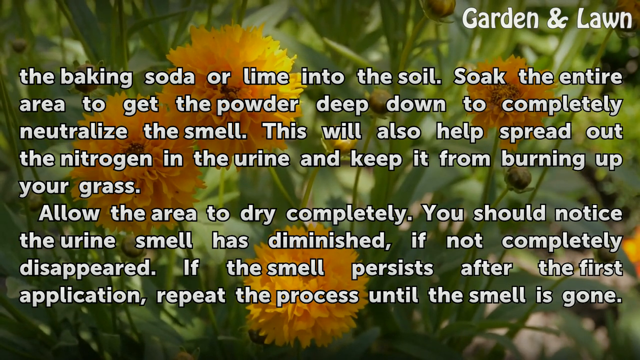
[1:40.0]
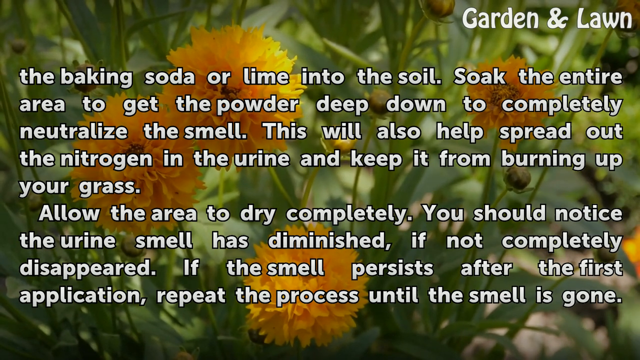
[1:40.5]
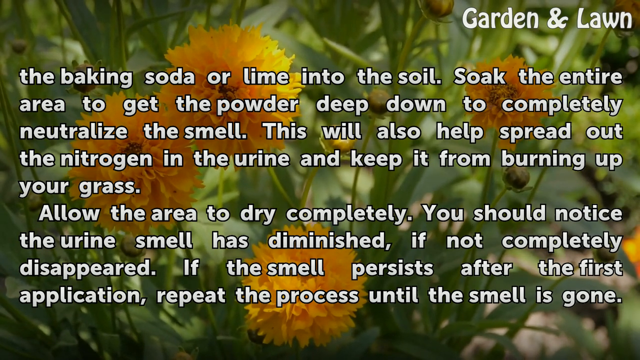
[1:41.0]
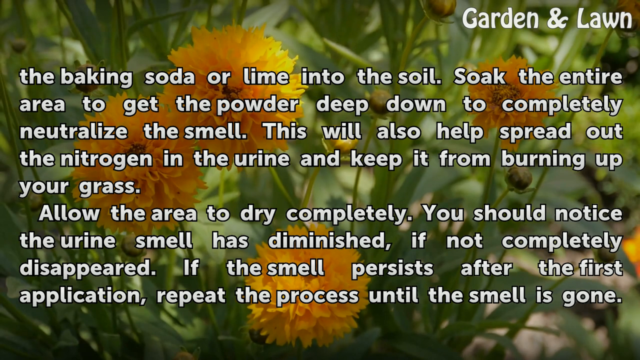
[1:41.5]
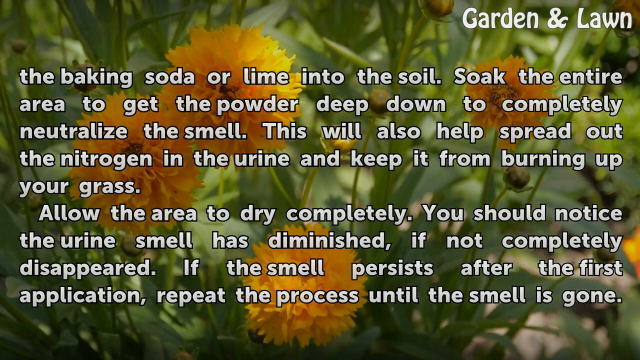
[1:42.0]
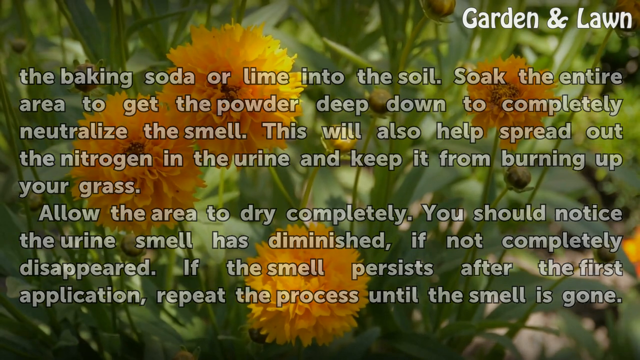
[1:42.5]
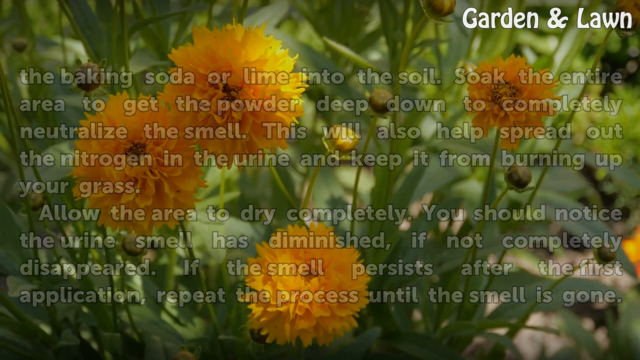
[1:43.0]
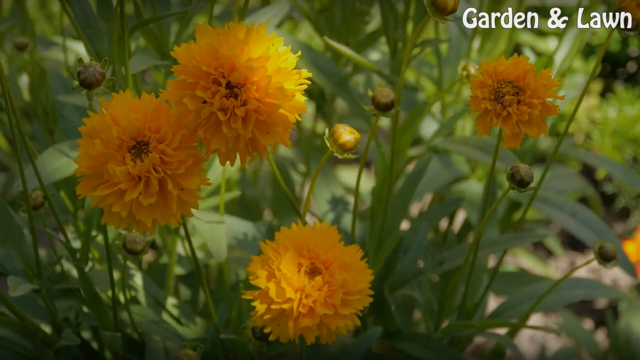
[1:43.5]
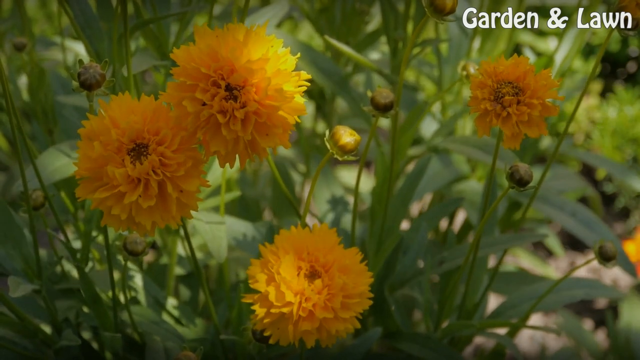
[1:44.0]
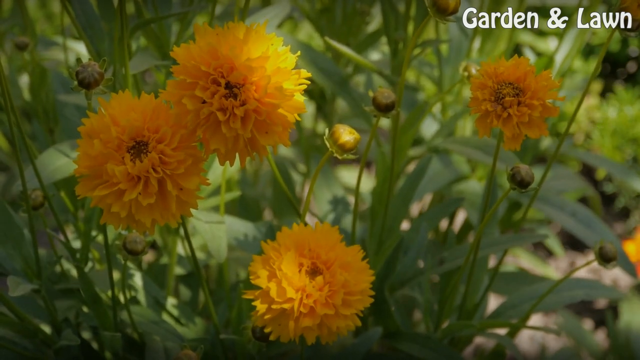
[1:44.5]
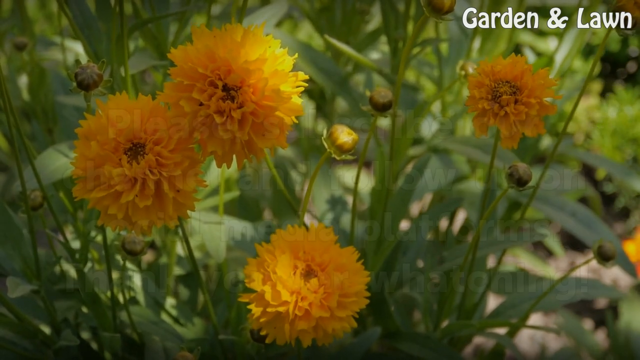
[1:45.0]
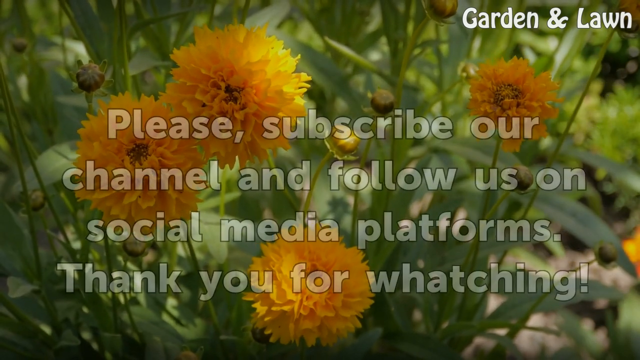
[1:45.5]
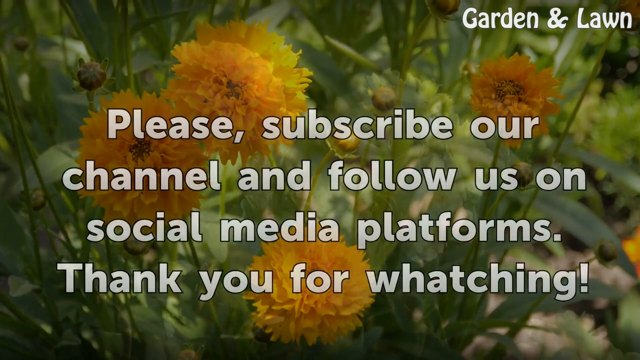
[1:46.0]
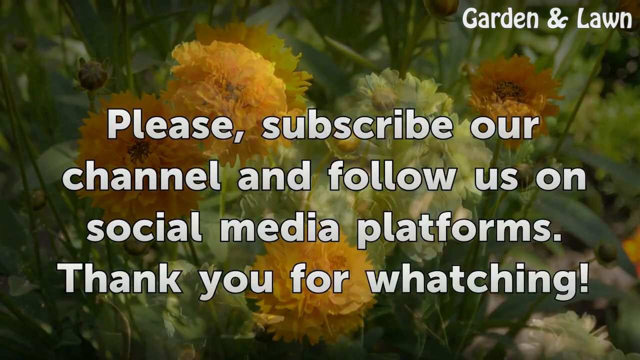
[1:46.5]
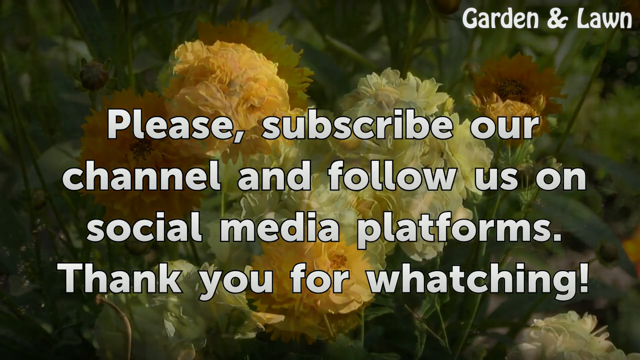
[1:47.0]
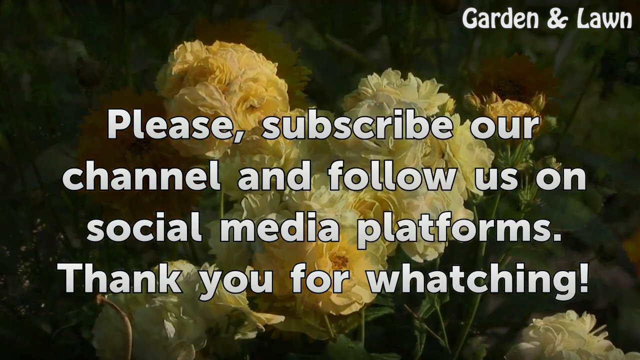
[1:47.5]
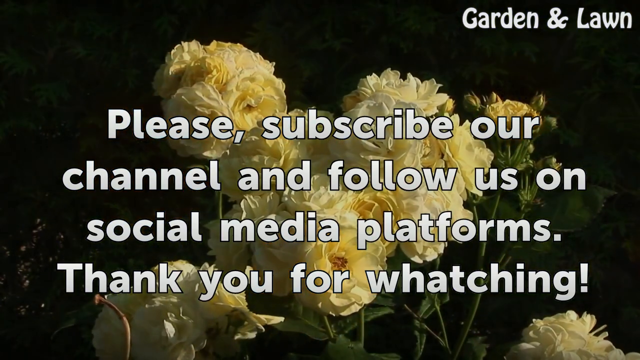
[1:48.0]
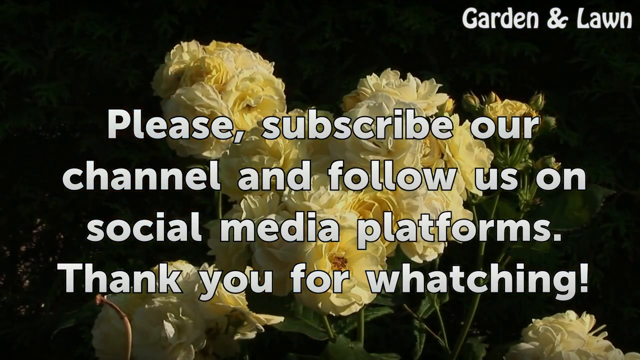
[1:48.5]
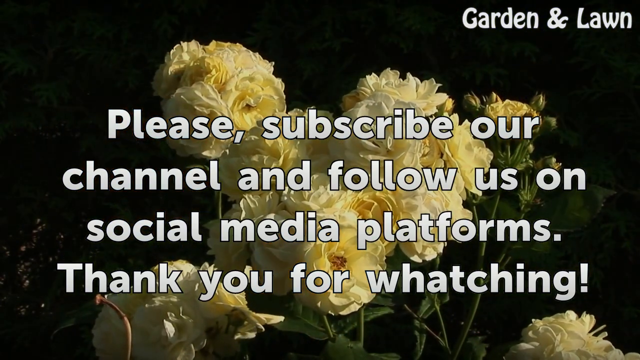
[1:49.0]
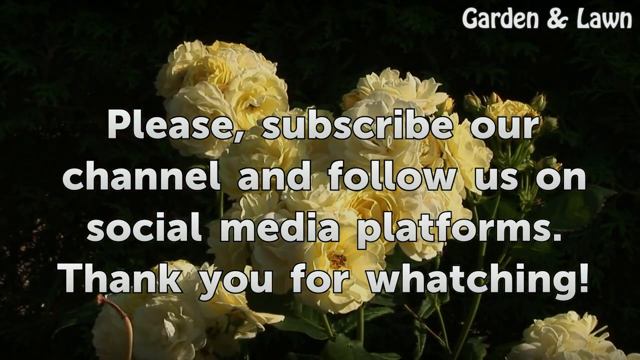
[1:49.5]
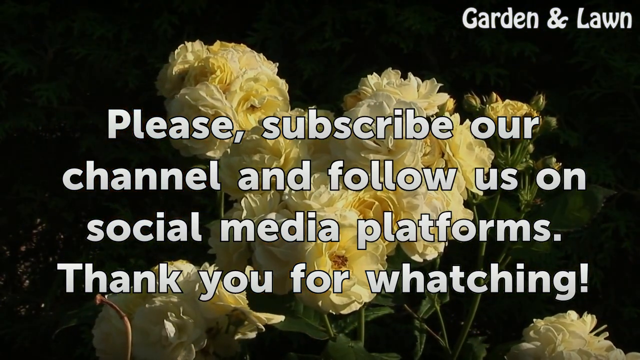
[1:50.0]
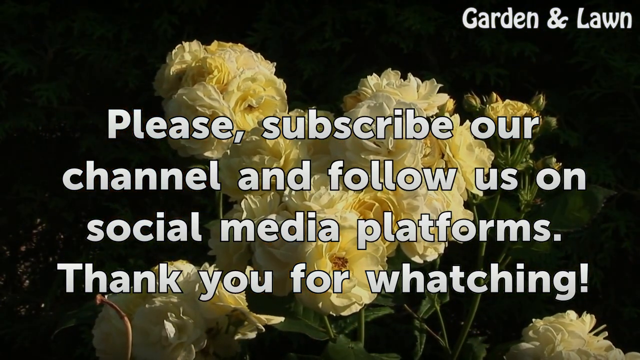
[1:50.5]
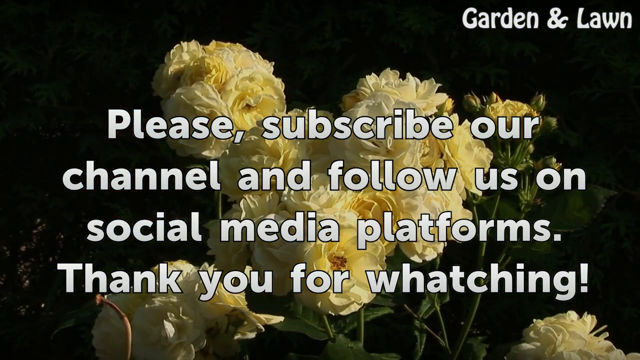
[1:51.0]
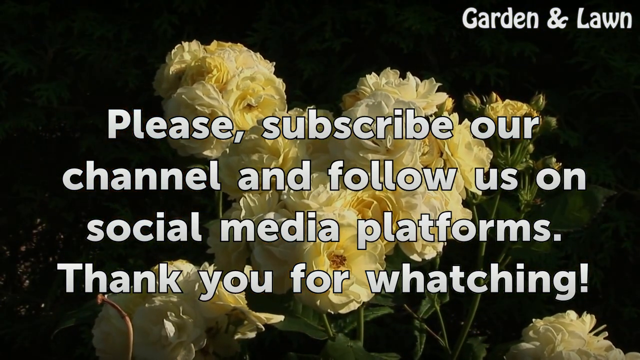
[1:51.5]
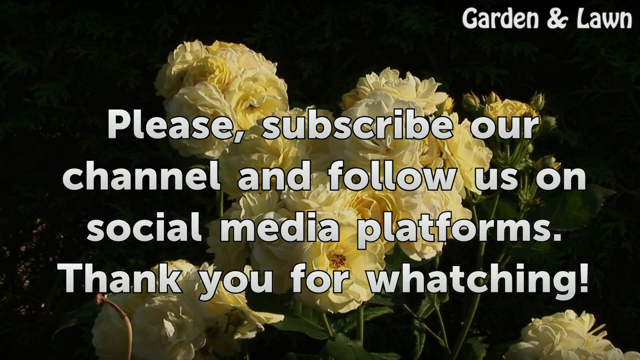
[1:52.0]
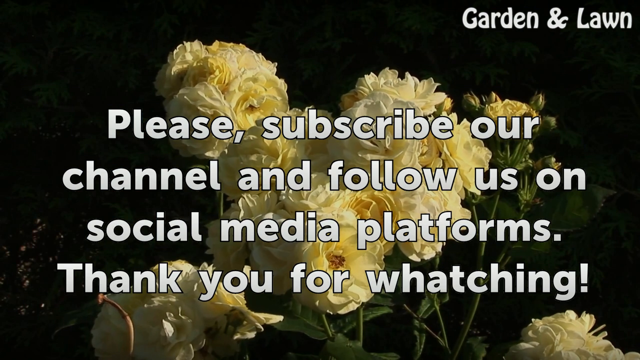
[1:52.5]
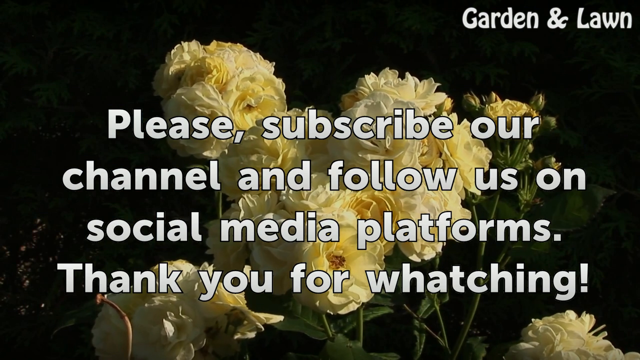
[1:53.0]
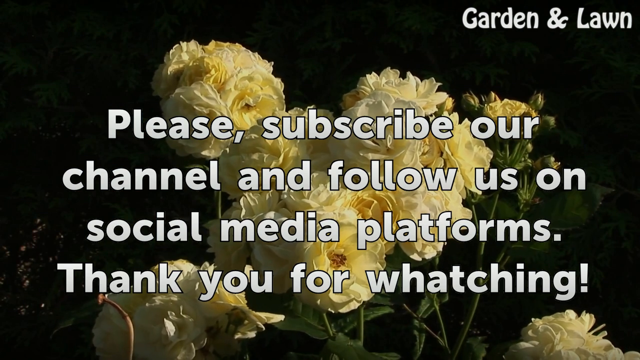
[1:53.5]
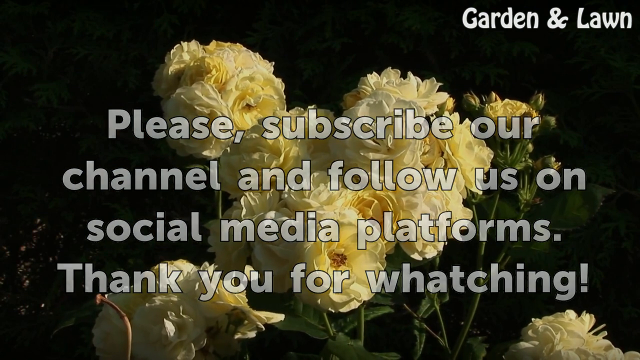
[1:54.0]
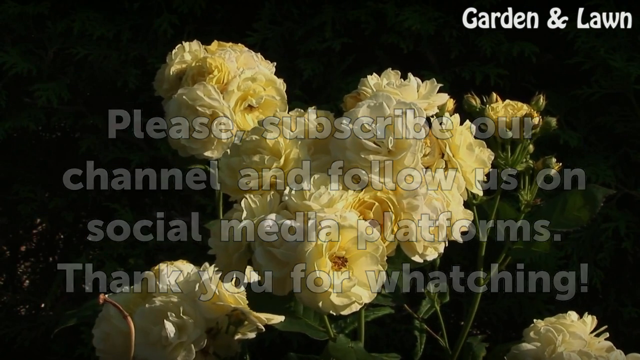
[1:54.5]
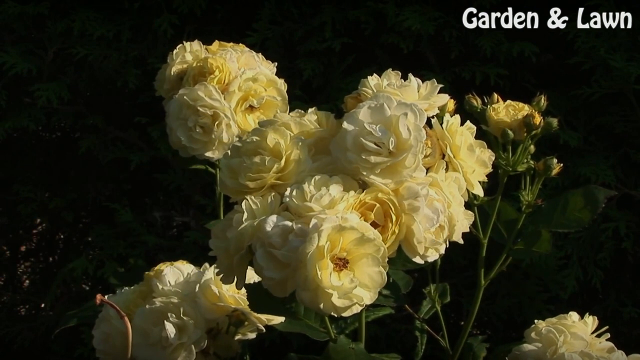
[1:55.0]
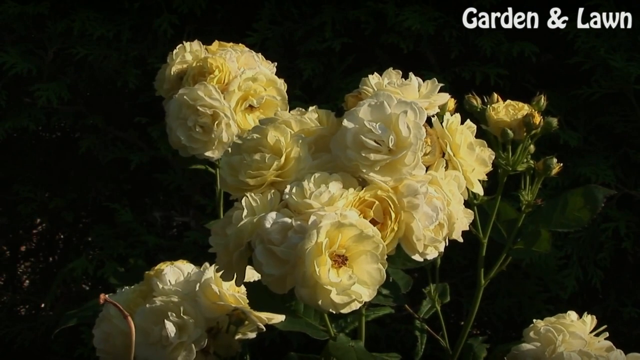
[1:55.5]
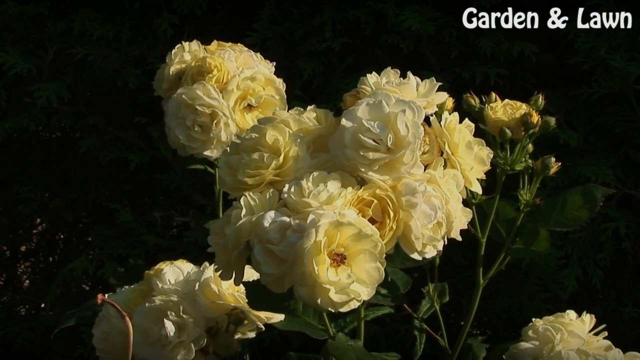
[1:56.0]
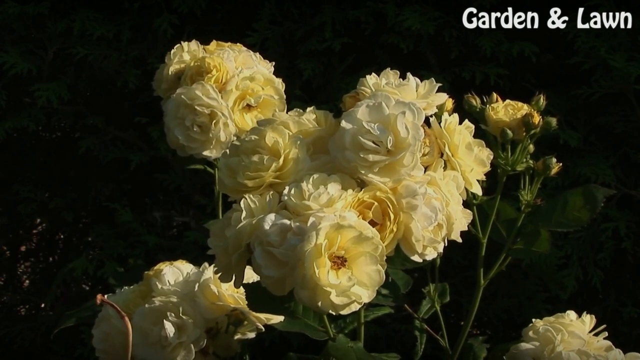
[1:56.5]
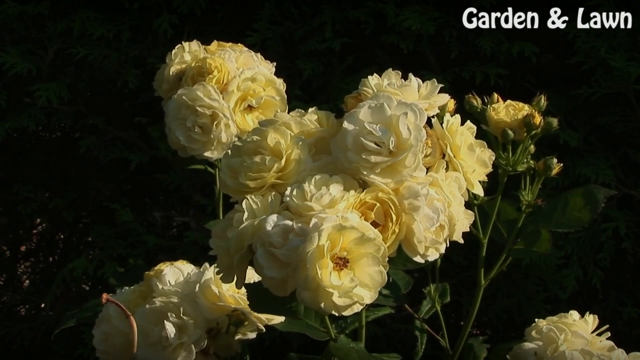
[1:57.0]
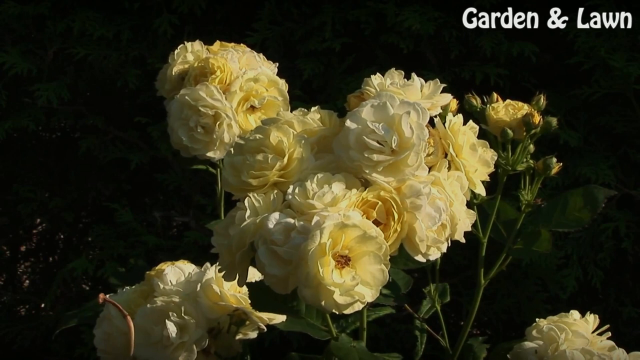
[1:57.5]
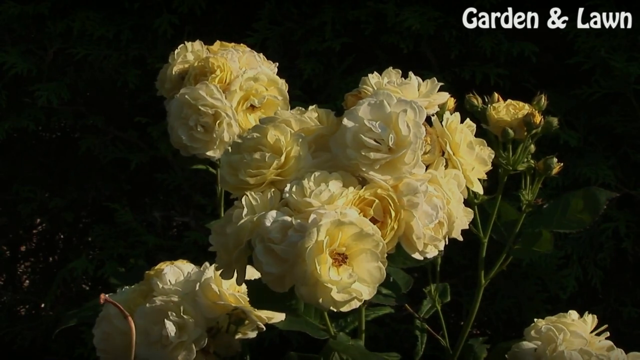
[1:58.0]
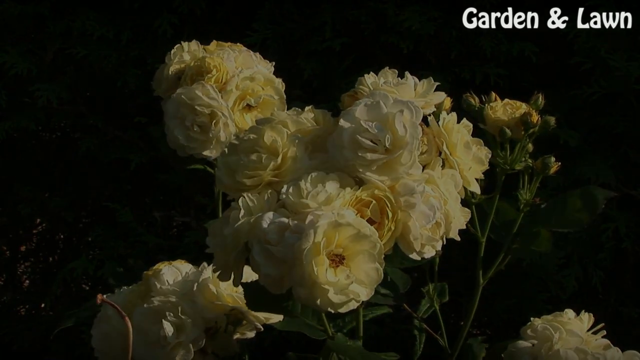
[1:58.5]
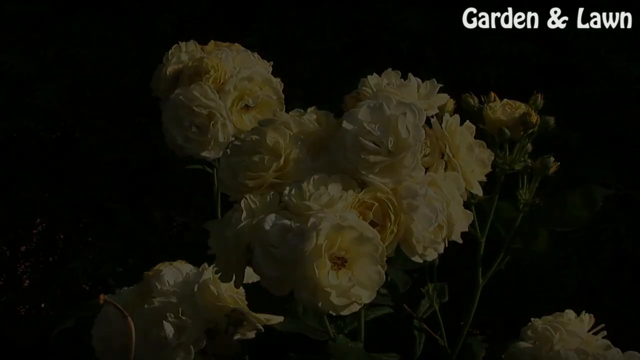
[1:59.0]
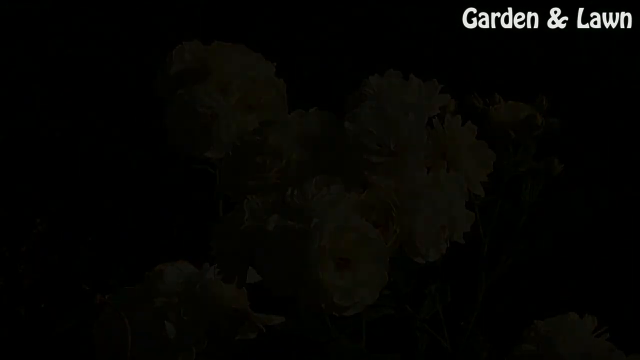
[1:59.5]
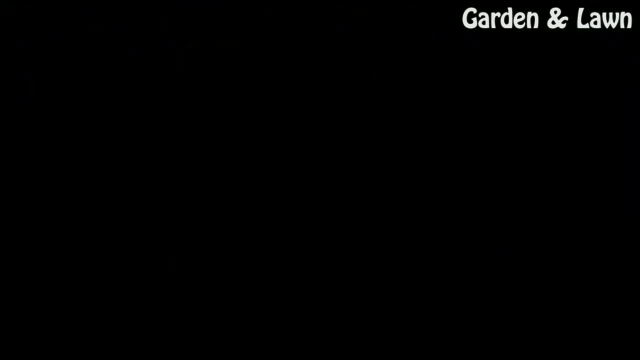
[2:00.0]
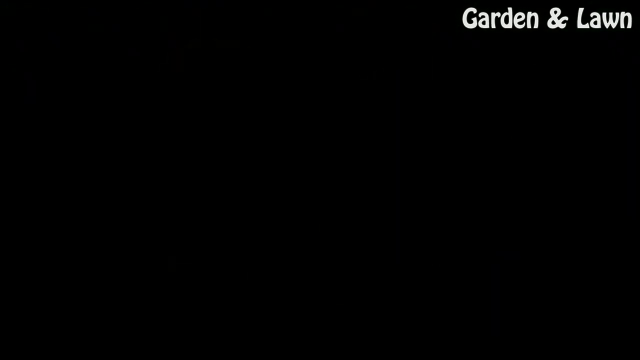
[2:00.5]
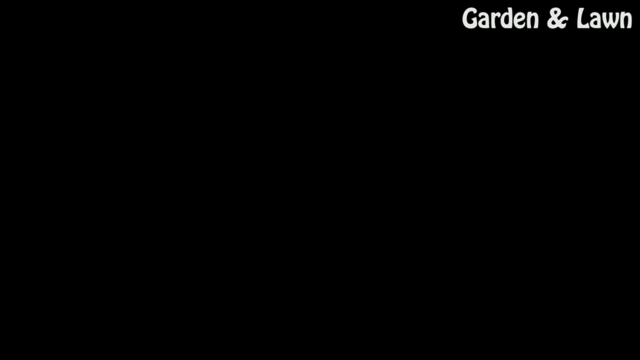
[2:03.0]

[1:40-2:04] The flowers look almost like a tissue that someone dipped in dye and wadded up: big balls of jagged petals at different heights, at least on the outer part. At the far right, one looks almost dead; it is the one by itself with the orange flower in front of it. A curving stem has a green flare on each side and a brownish ball of something, and a couple of other areas look like that. Text then reads "please subscribe to our channel follow us on social media platforms. Thank you for watching," with "watching" misspelled with "wh" instead of "watch." Next, almost white carnations are clustered together. One is by itself, closest, at the bottom left, and one faces the viewer with a brownish middle. There is black all around, other than at the bottom right. Some stems are visible, probably three or four sets branching off from the others, and one carnation at the bottom right is seen from the side, facing up.